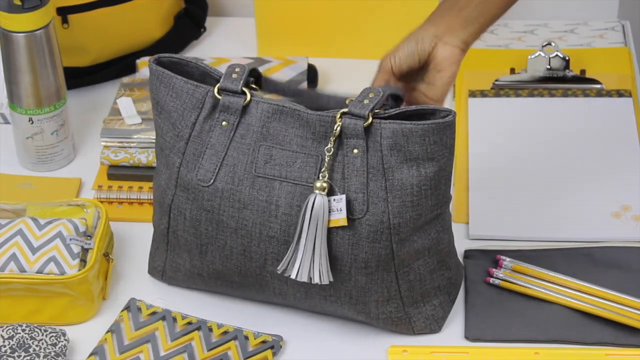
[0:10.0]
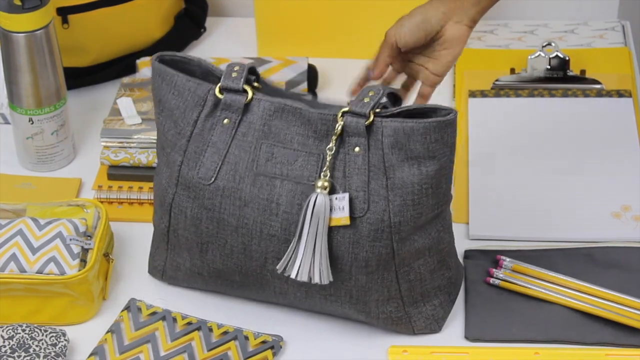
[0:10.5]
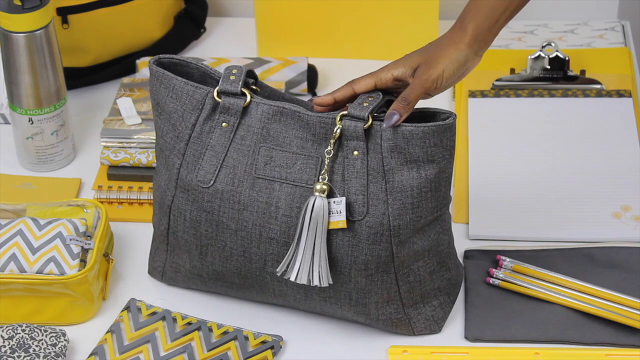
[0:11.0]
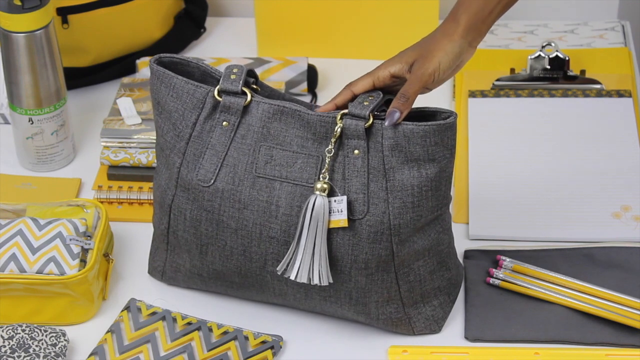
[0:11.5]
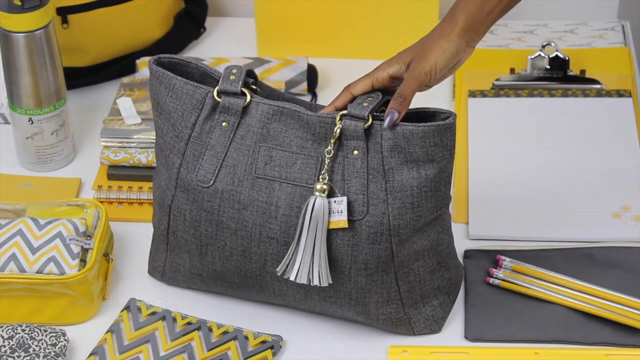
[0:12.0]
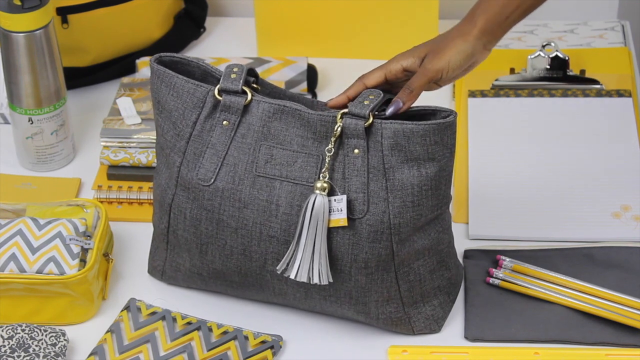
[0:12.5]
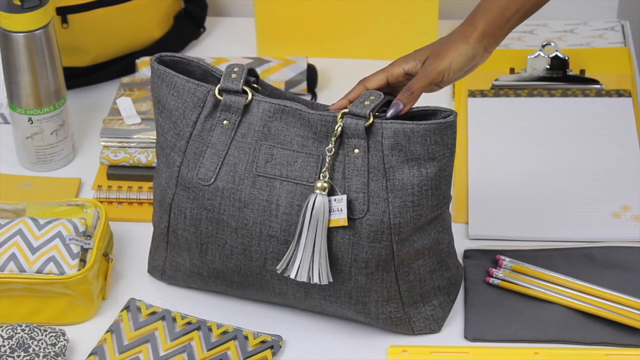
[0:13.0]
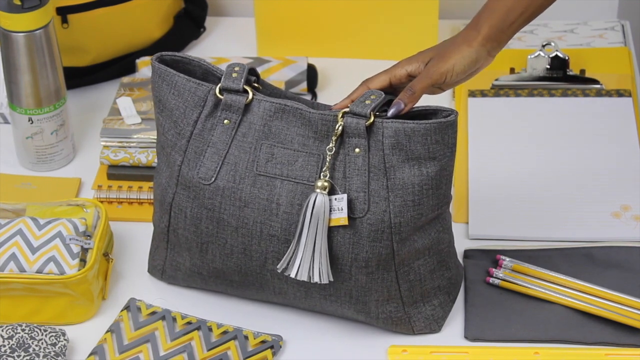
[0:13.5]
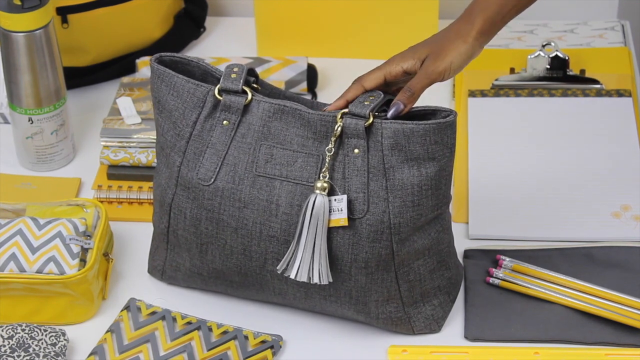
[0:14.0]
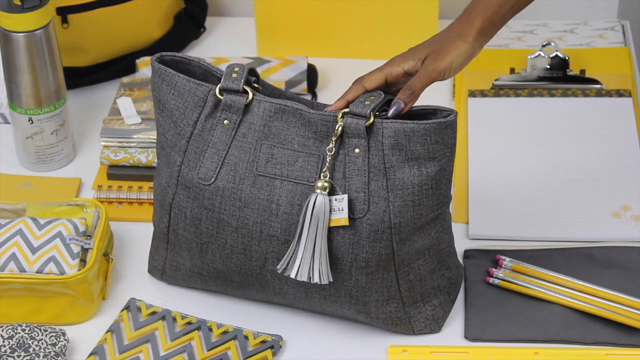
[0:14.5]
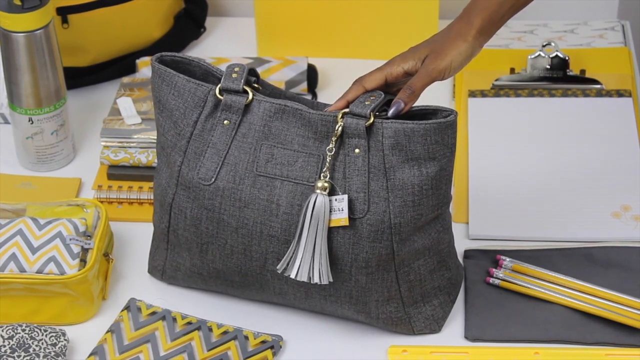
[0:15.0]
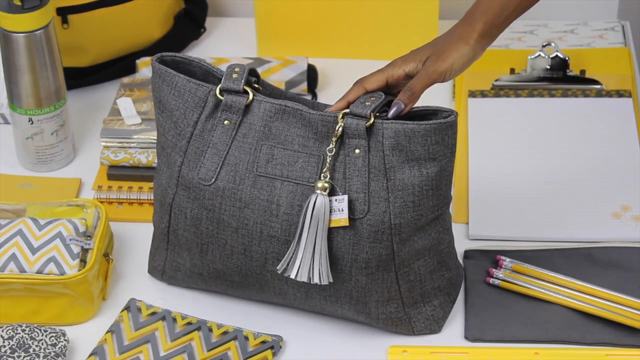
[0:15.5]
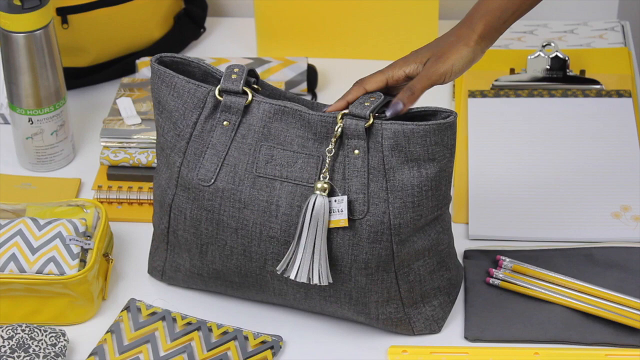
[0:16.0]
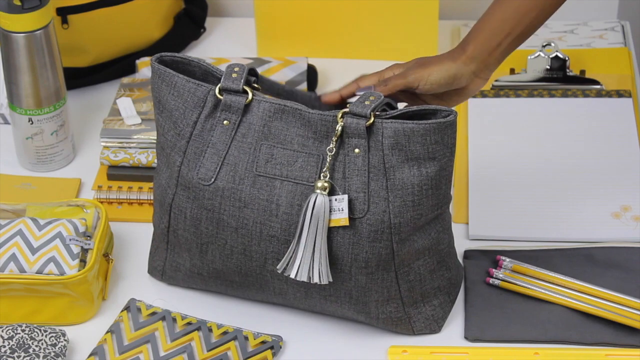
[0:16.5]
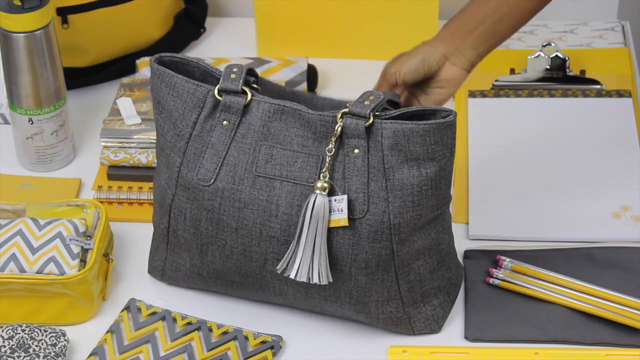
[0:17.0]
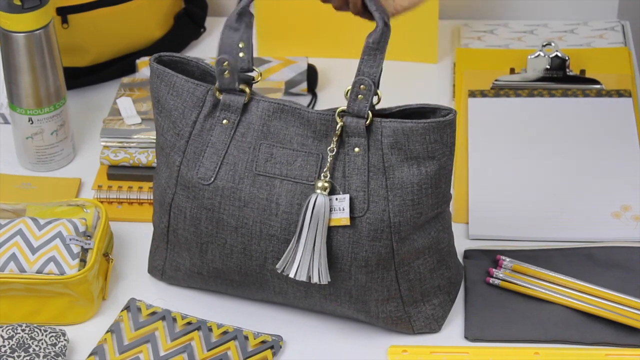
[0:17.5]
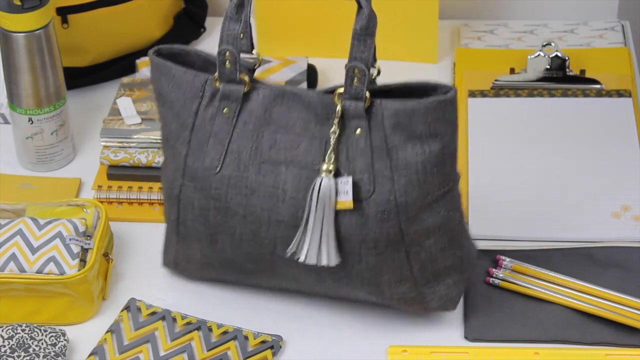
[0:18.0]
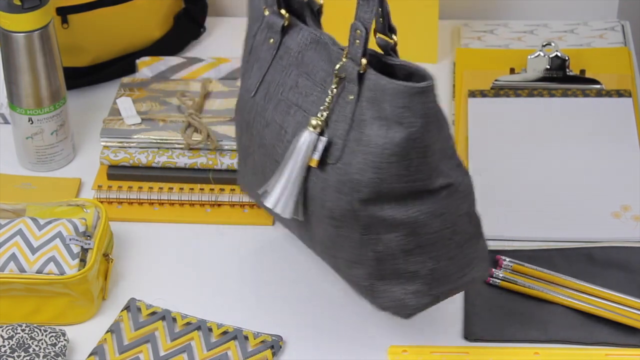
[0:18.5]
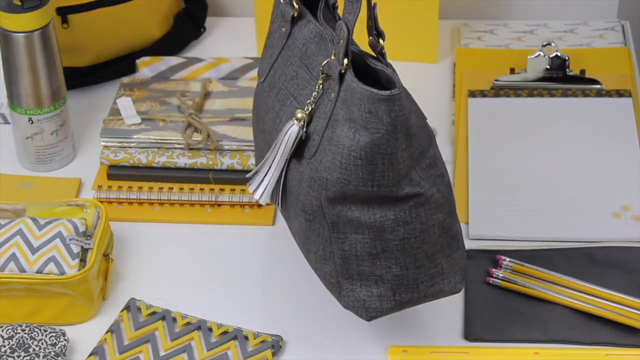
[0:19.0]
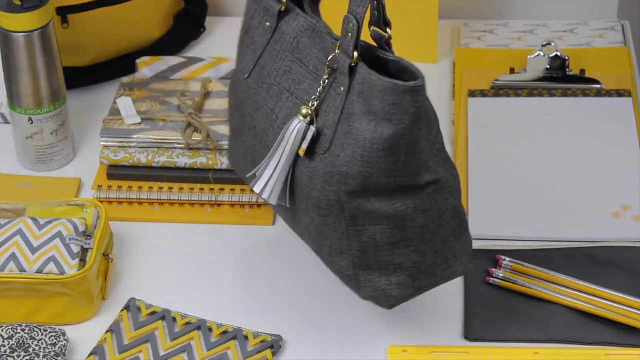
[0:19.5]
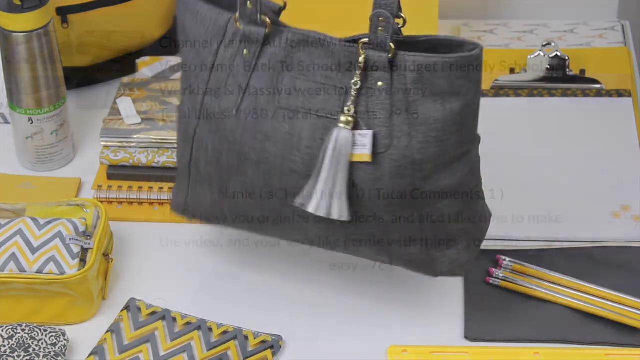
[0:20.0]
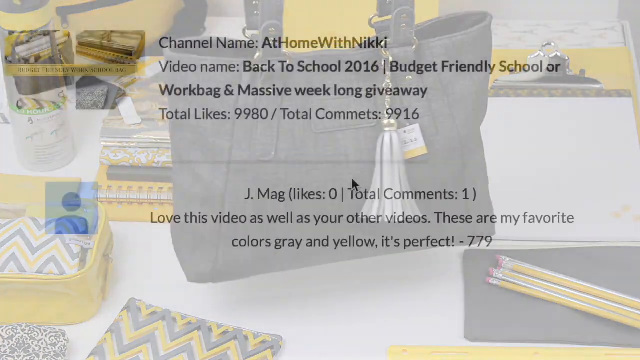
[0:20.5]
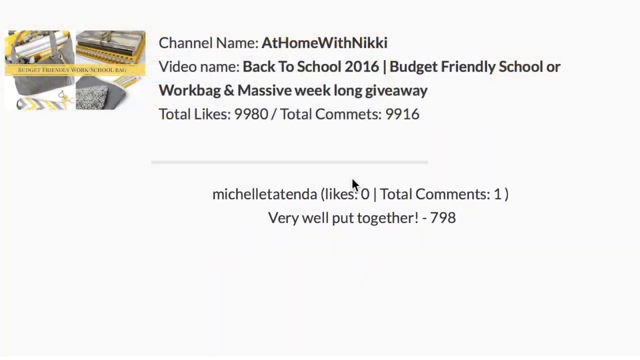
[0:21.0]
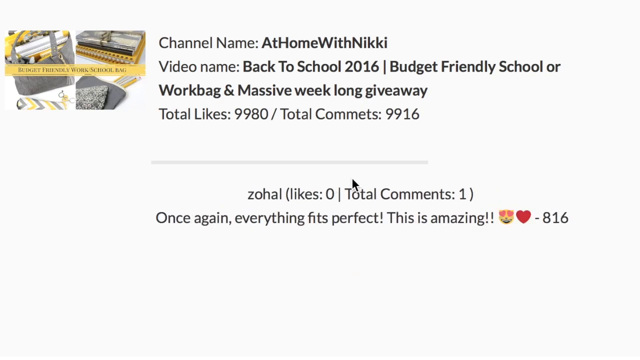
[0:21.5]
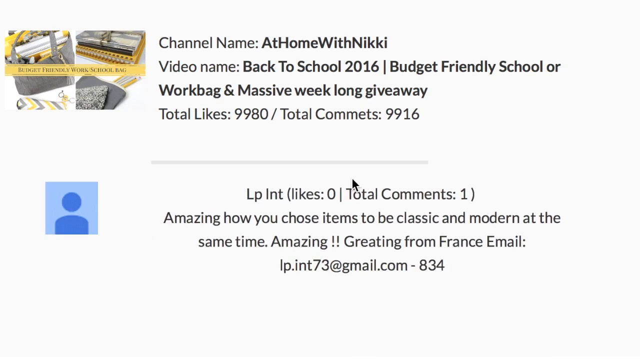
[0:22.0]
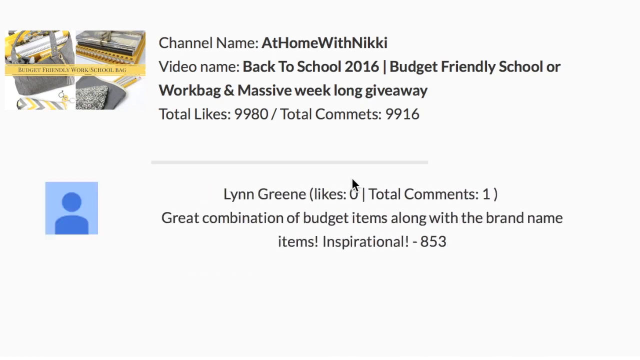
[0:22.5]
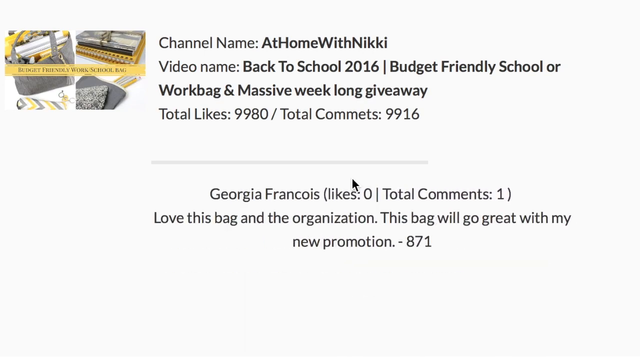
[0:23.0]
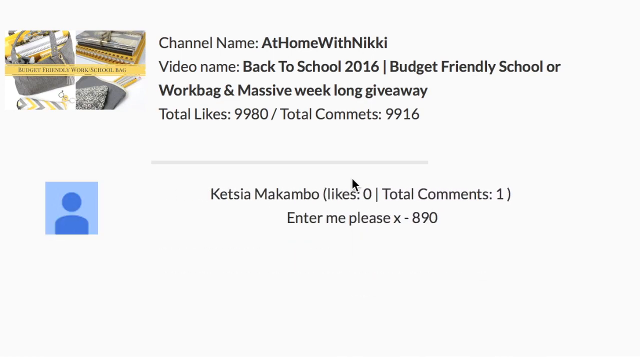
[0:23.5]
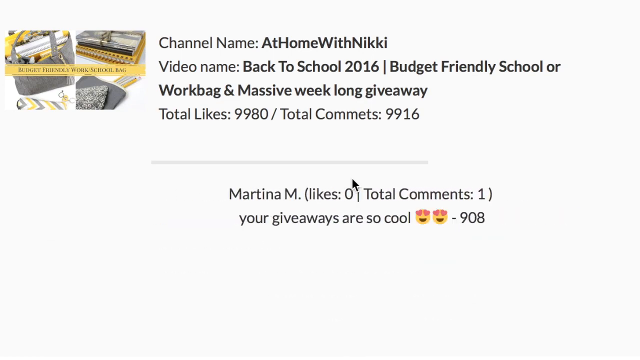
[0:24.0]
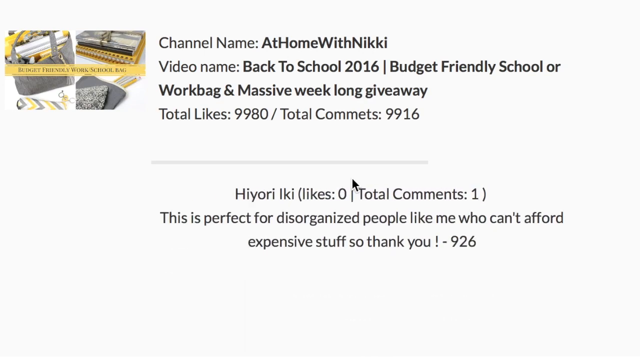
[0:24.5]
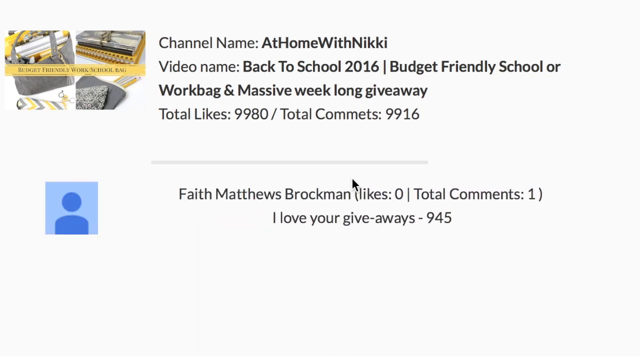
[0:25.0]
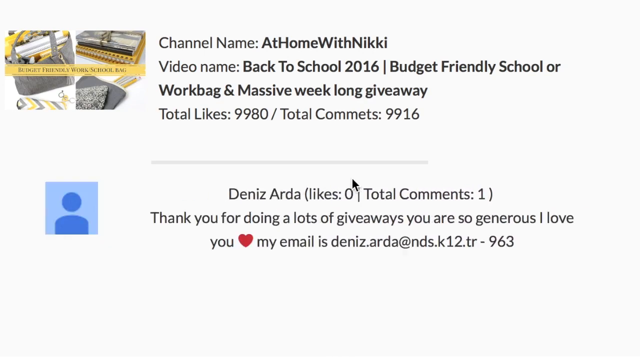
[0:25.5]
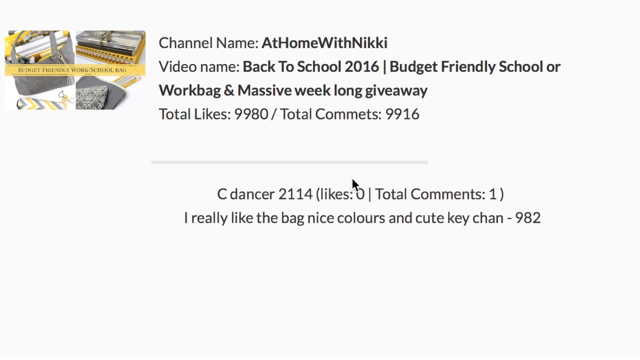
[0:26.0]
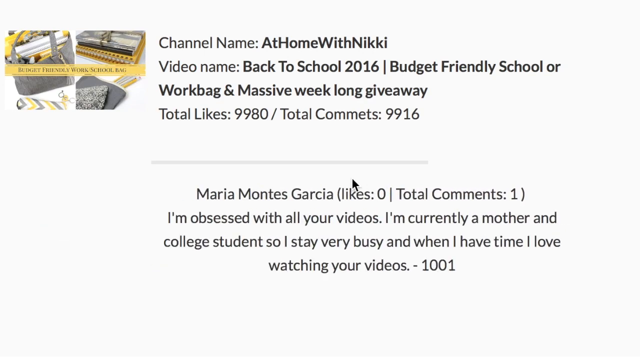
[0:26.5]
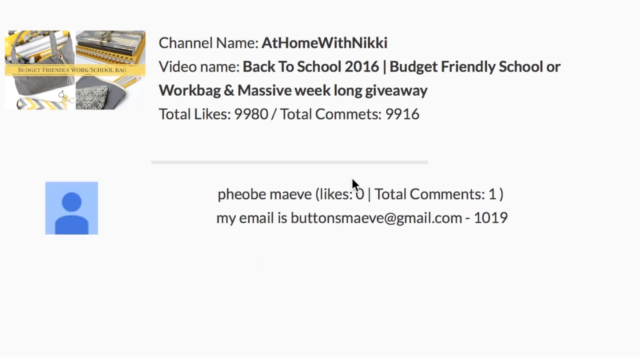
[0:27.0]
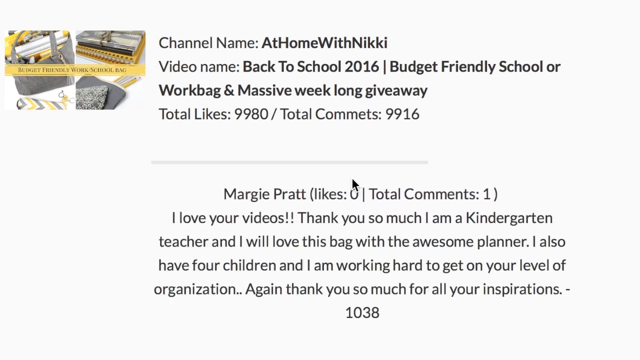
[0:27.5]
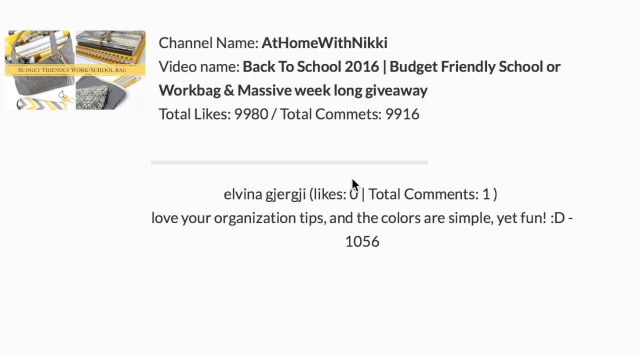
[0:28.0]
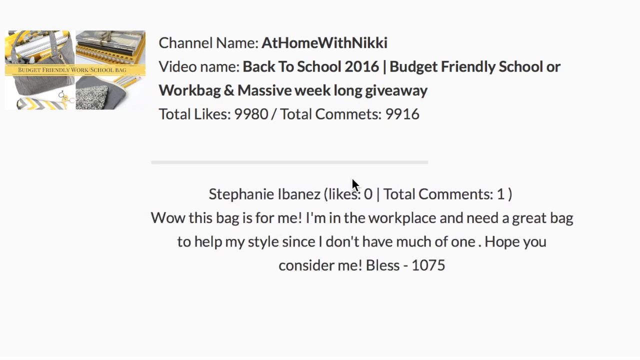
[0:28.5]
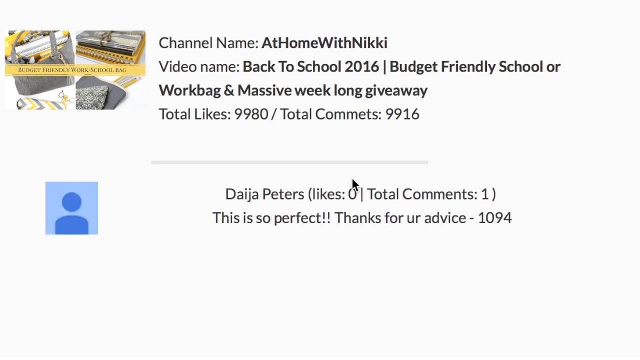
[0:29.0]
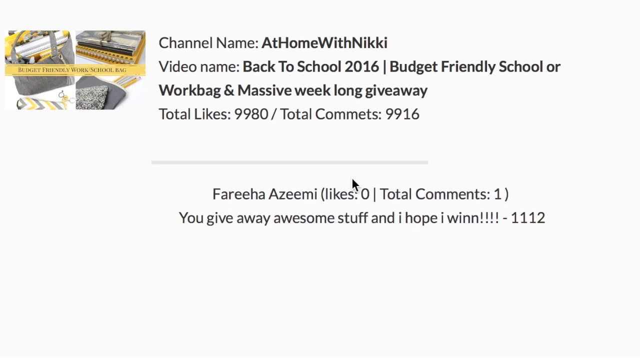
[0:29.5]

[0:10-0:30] The African-American woman's hand makes adjustments to the bag. There seems to be something like a price tag on the gray purse. The hand stays where it is, kind of taps the top for a moment, then picks the bag up and kind of rotates it to show the side. Next comes a social media feed on a white background, with a picture of the table and all the items in the top left-hand corner and a little blue avatar placeholder just below it. The channel name is "at home with nikki" and the video name is "back to school 2016 budget-friendly school or work bag and massive week-long giveaway". Total likes read 9,980 and total comments 9,019. Likes and comments flash very quickly across the bottom: one from team i-93 says "i love the gray bag" with a smiley face and "looks so nice"; one from sleepy sherry says "i love everything" followed by her email address, "sleepy sherry at gmail.com"; sparkling lemonade writes "so pretty" with heart eyes; another says "the goody you give is freaking awesome love you"; and jayden rathwell writes "i recently started watching all your organization videos i just want to thank you i've been so unorganized when it comes to school and i really want to change this going into university". The comments keep flying by to the end of the shot.